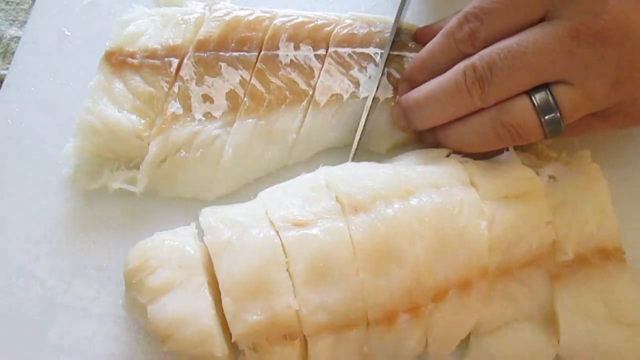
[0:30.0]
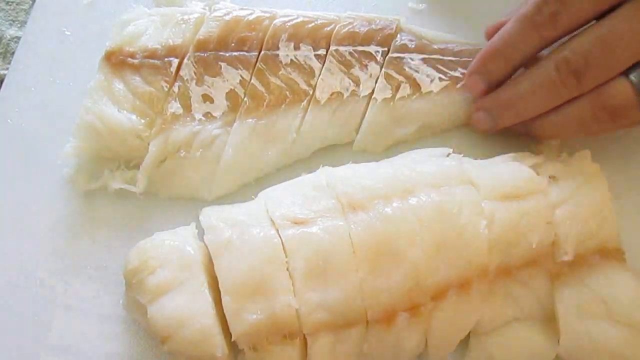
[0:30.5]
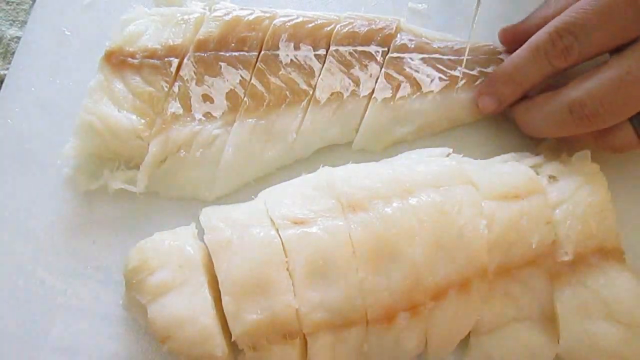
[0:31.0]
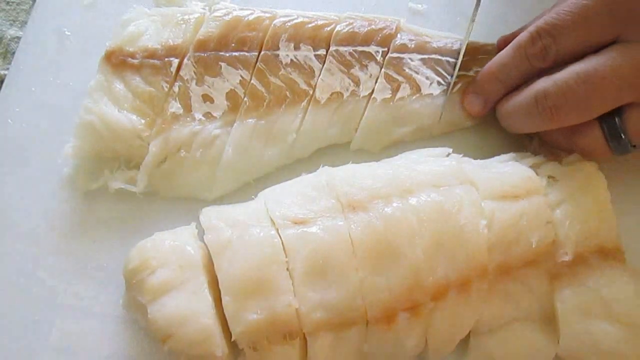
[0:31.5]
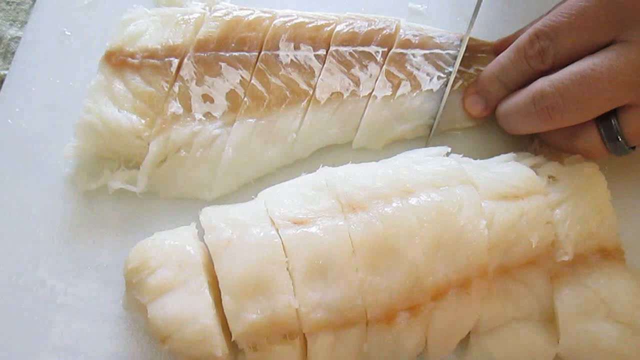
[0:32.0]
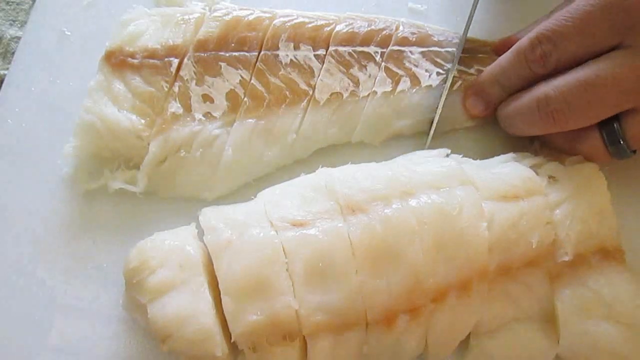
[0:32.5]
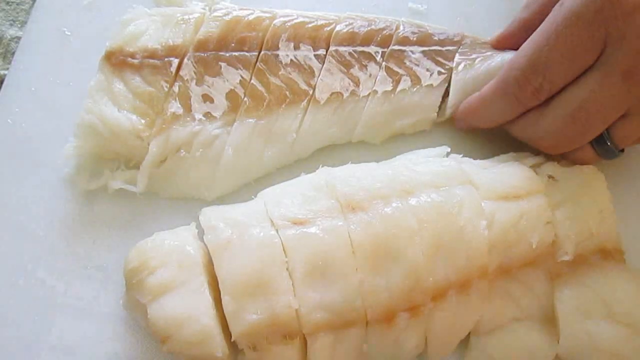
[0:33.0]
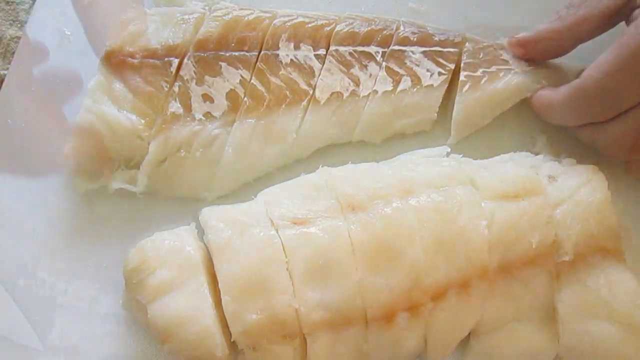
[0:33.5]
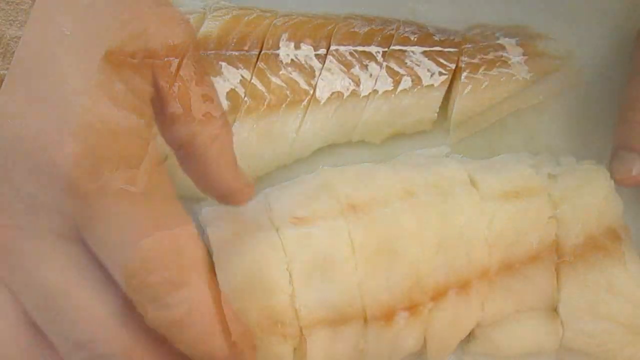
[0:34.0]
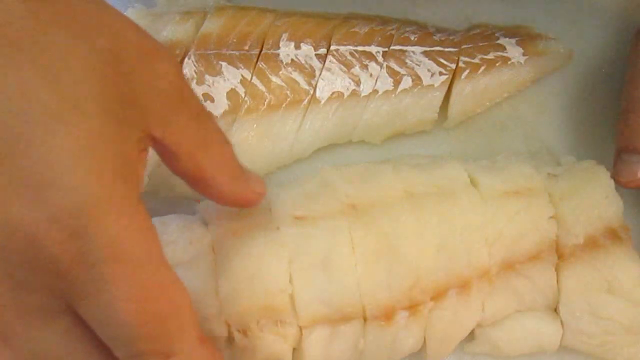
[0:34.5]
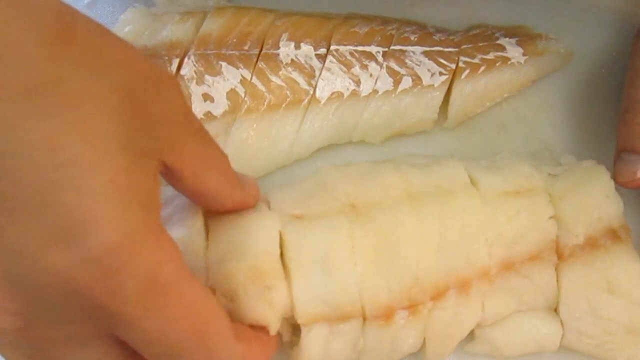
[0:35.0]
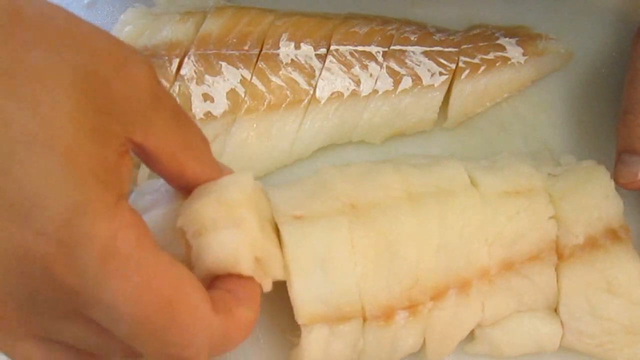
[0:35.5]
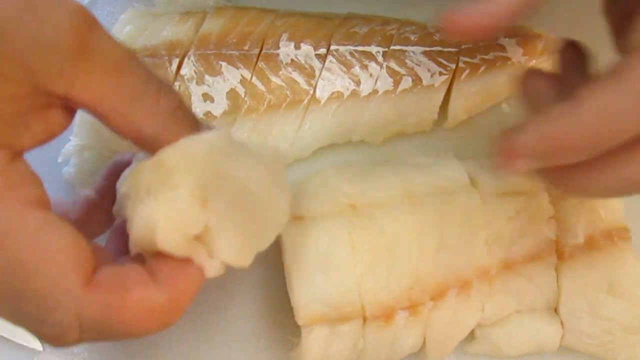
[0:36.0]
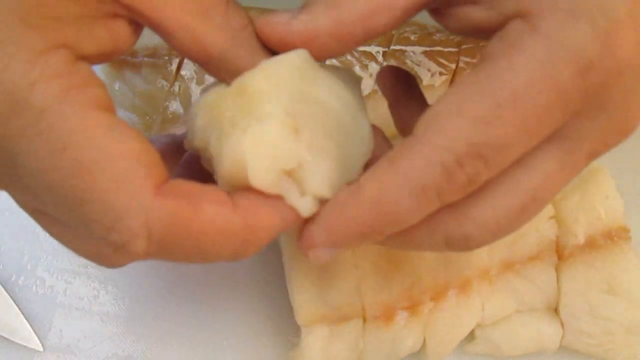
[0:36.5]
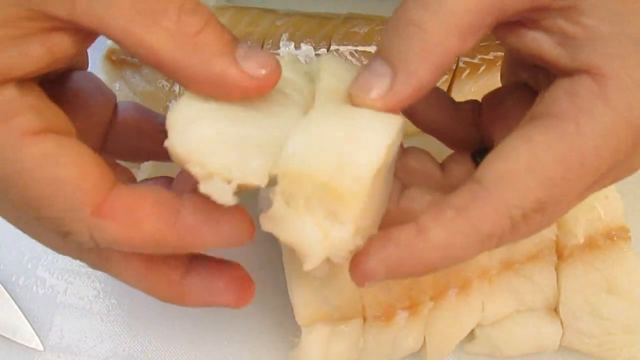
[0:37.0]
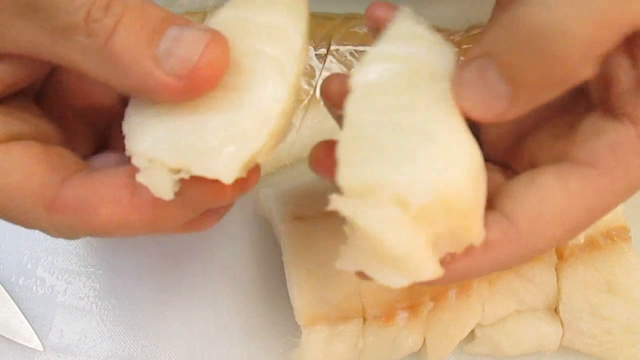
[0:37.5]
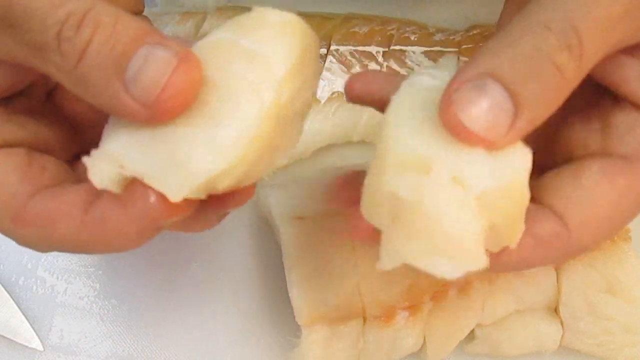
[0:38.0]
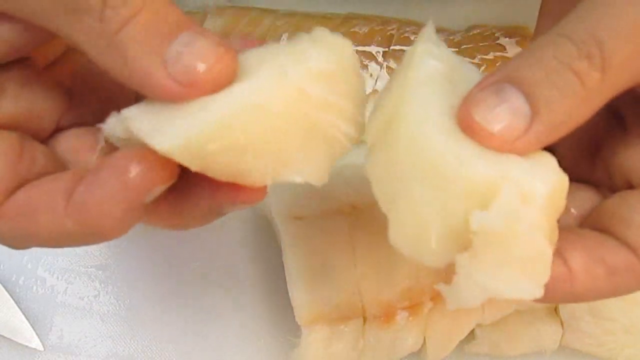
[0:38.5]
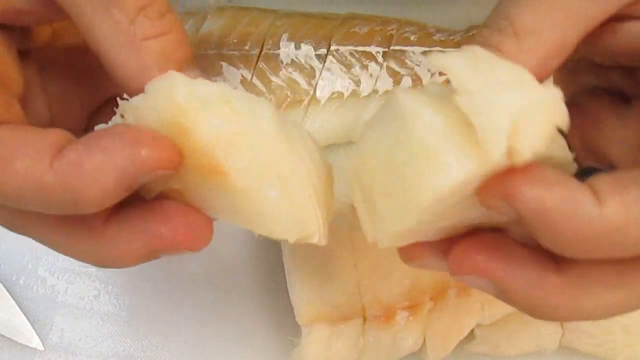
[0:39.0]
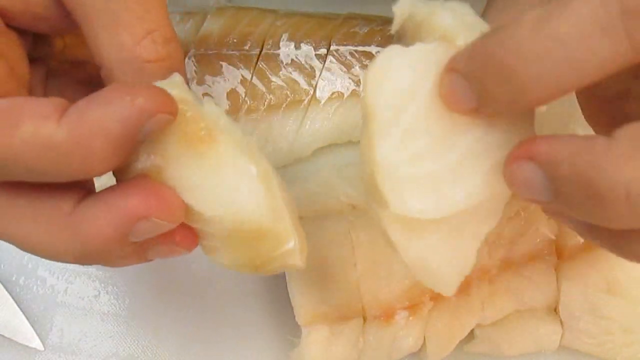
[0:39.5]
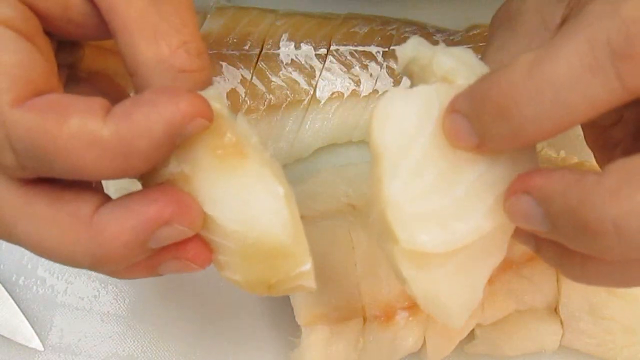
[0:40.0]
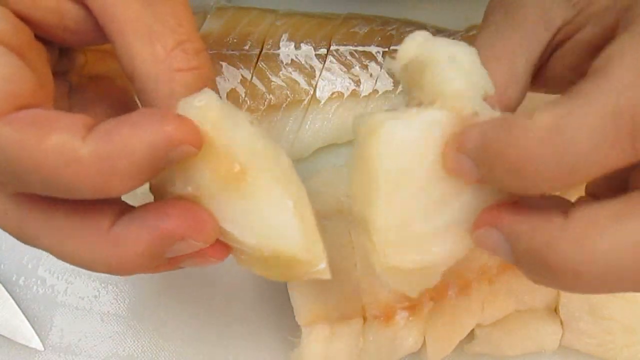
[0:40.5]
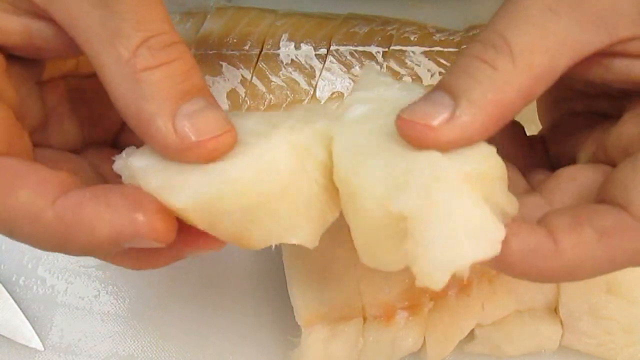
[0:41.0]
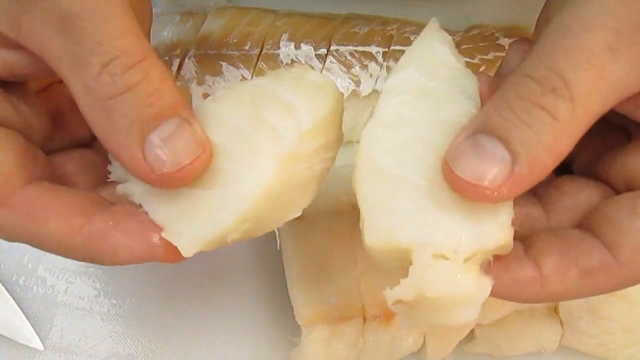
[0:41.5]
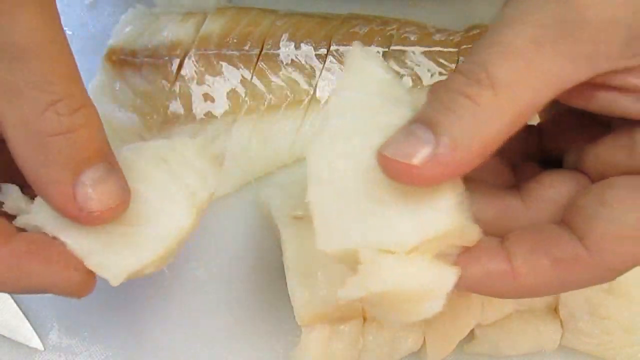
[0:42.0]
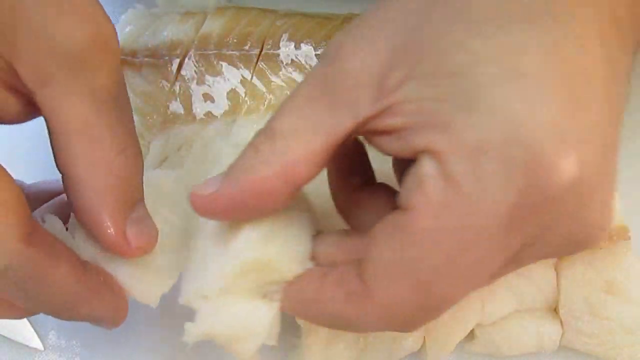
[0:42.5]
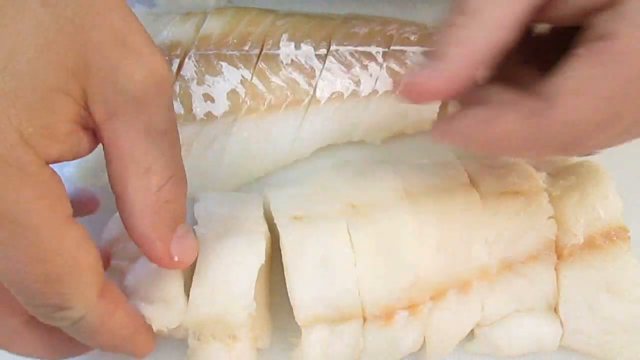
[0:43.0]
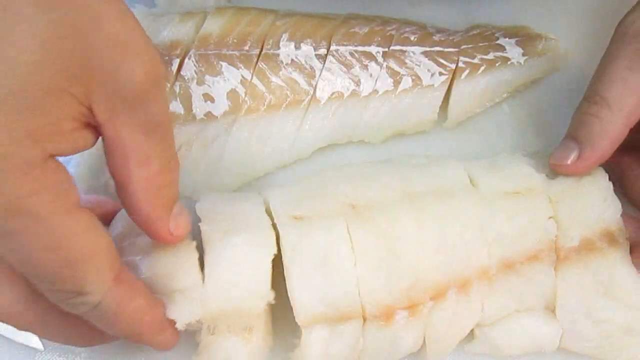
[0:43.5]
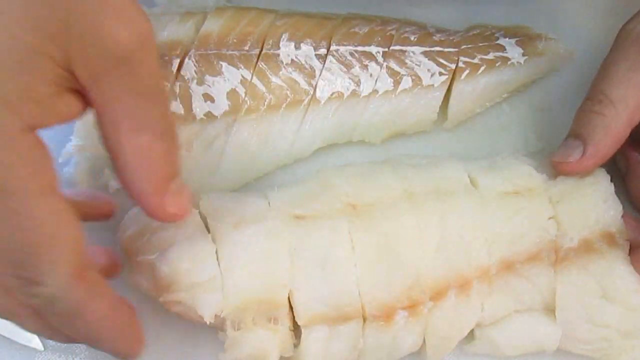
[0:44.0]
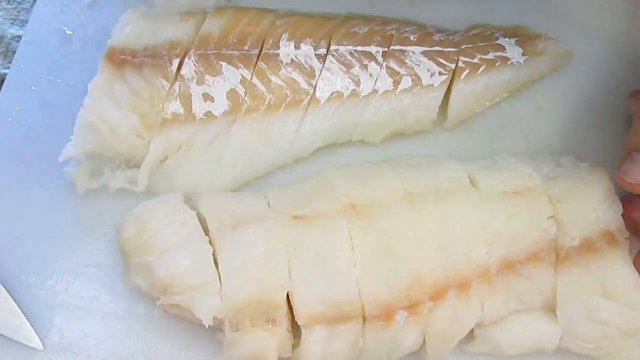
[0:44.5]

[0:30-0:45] The last two pieces of the narrow bottom half of the fish, the tail portion, are cut. The scene then moves to the wider white top portion. The left hand picks up the first two pieces cut from the top half, the right hand pulls one piece apart, and the two pieces are turned to show the inside; the fish is probably about two to three inches thick, thicker than the bottom half. The hands are bare, with no gloves, and the nails are short and manicured. The fish remains on the white cutting board, and toward the end the tip of the knife is visible at the bottom left of the screen, where it was laid down so the fish could be picked up.